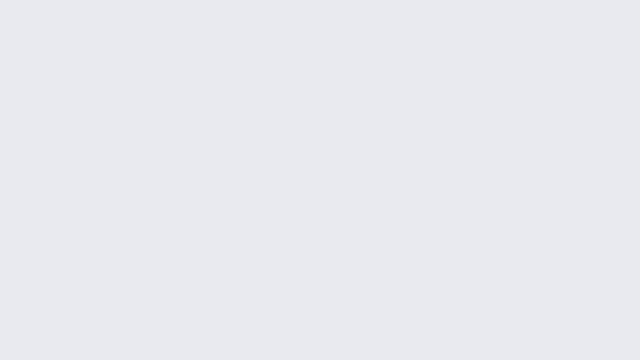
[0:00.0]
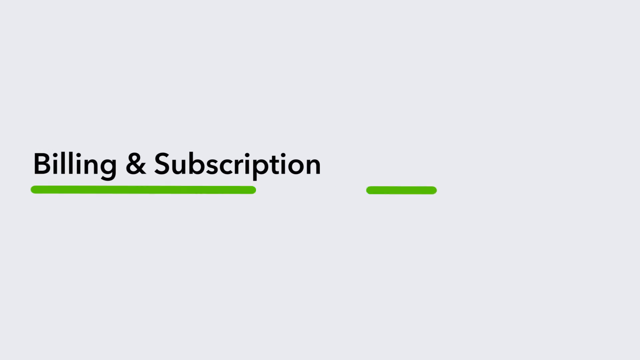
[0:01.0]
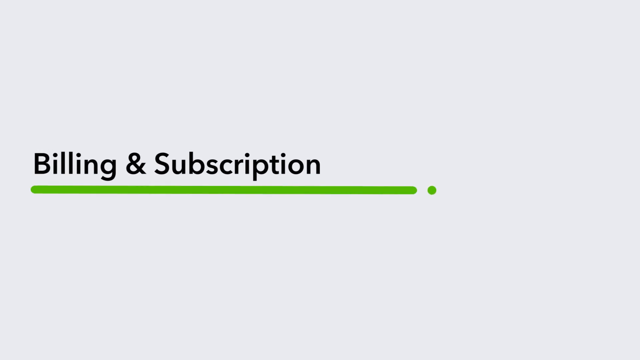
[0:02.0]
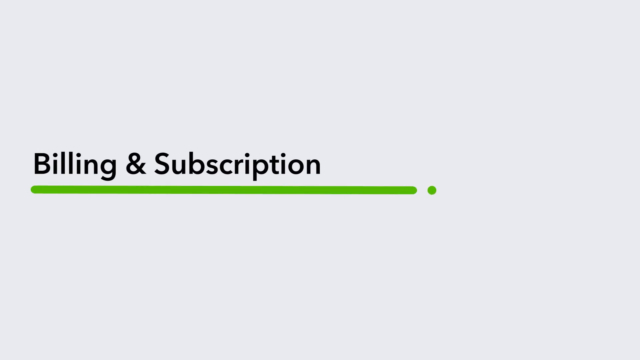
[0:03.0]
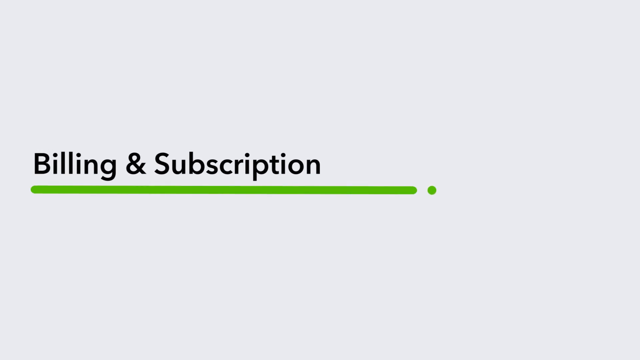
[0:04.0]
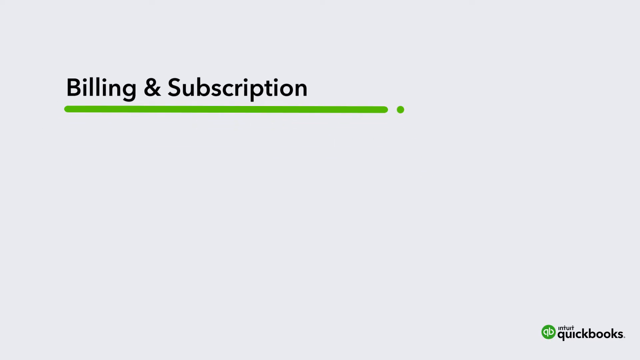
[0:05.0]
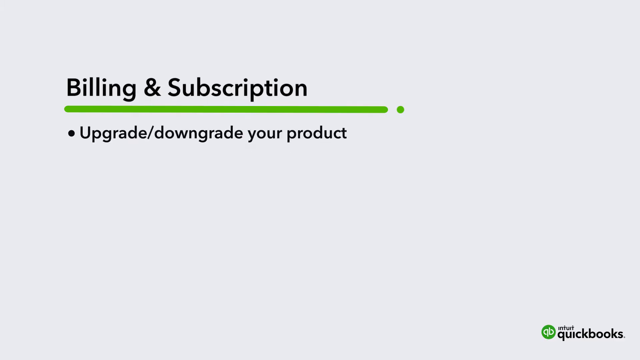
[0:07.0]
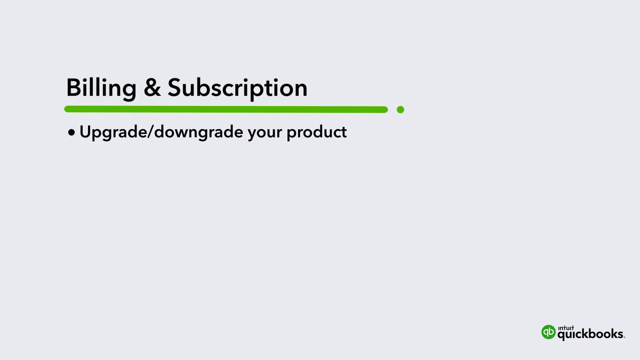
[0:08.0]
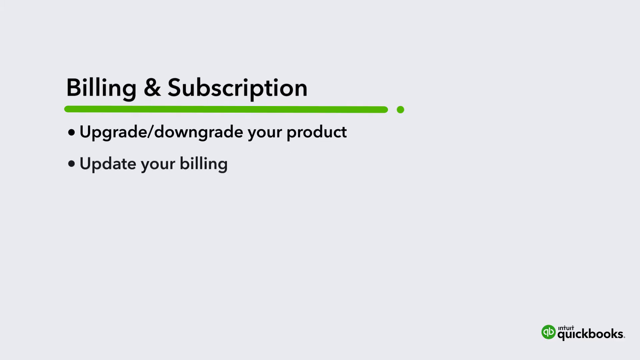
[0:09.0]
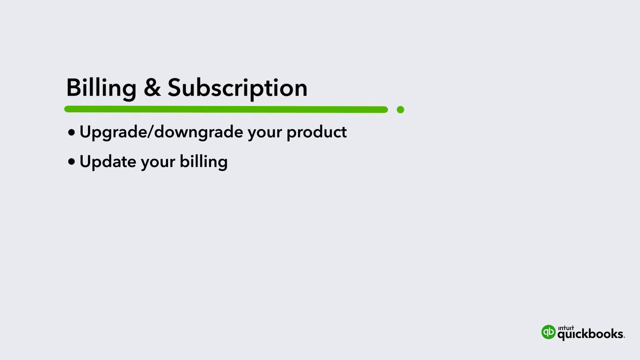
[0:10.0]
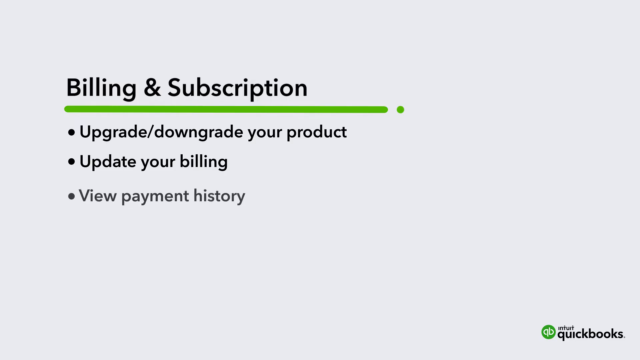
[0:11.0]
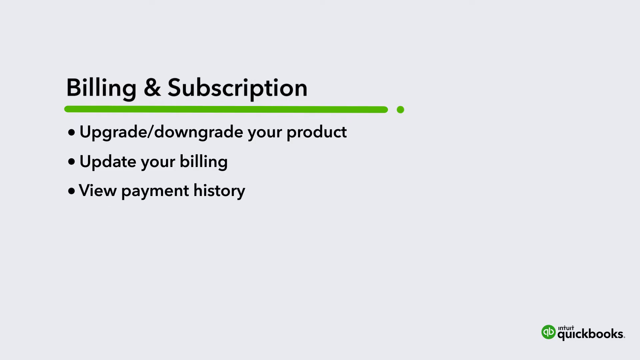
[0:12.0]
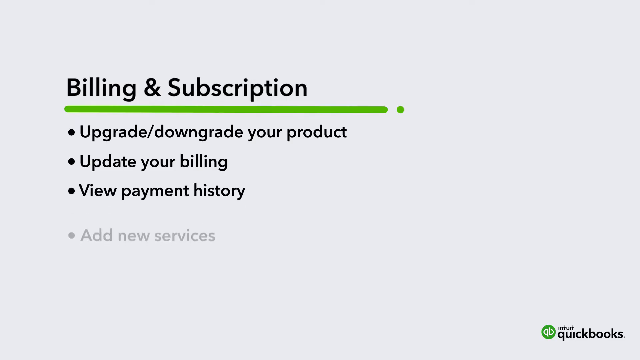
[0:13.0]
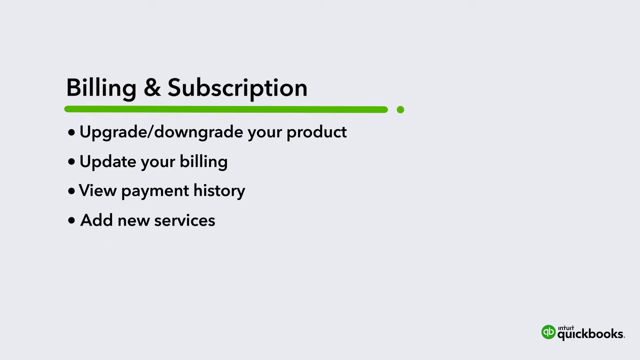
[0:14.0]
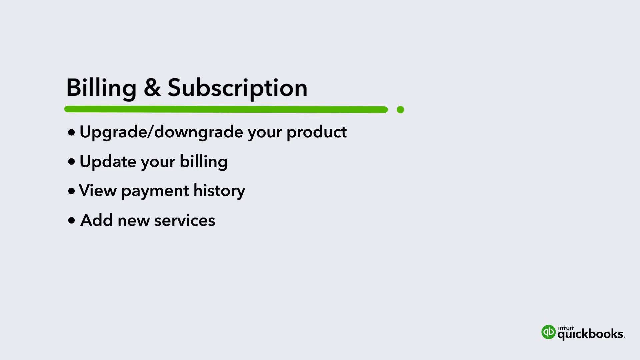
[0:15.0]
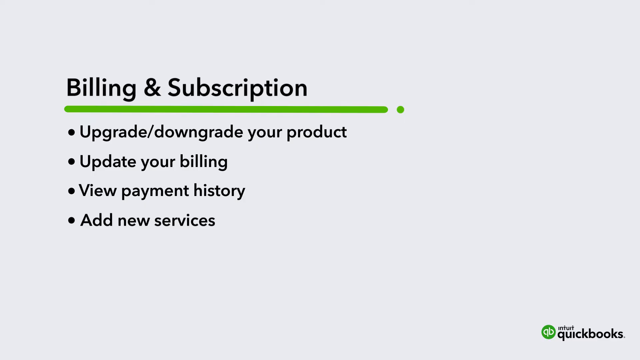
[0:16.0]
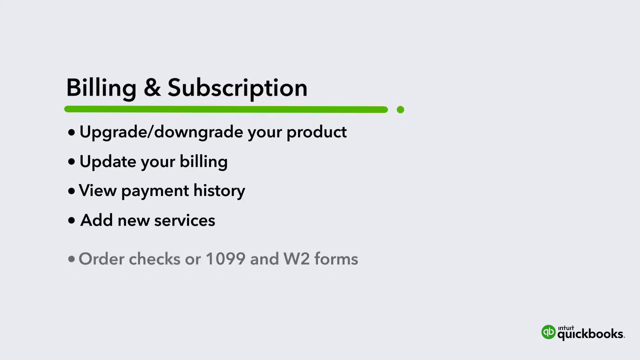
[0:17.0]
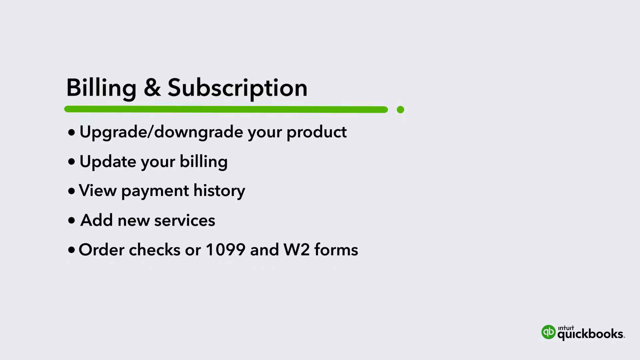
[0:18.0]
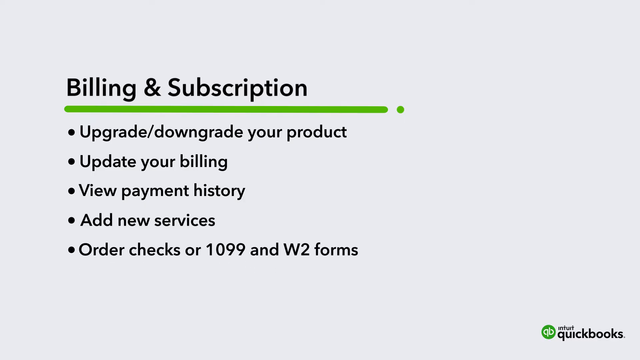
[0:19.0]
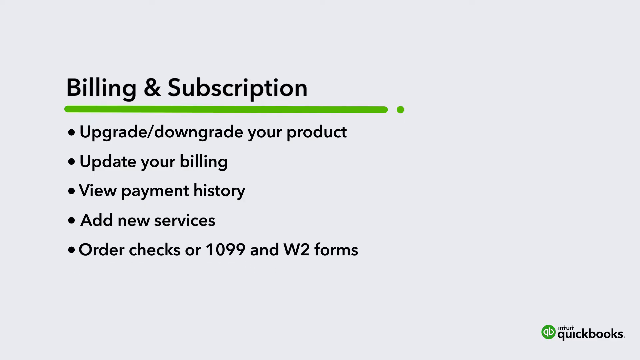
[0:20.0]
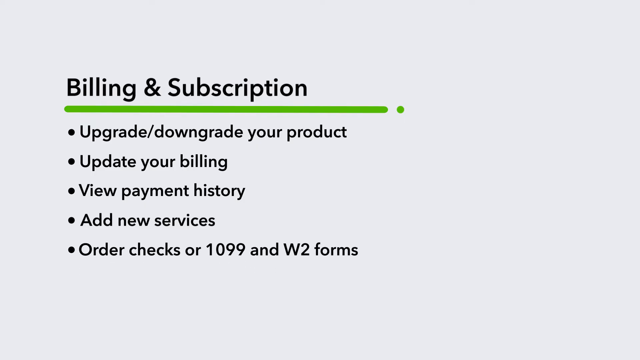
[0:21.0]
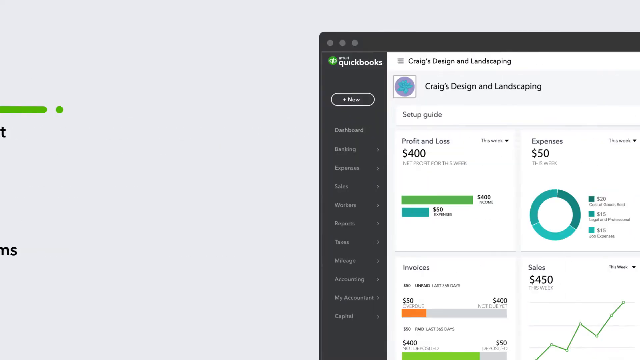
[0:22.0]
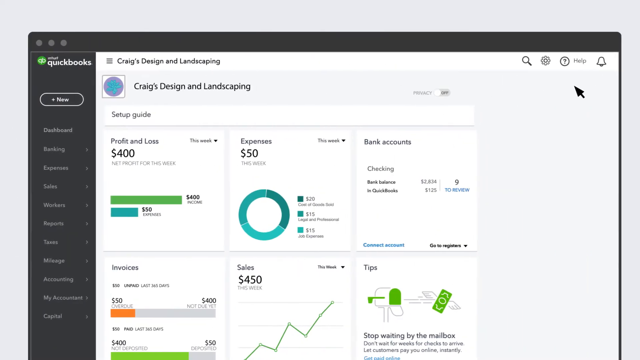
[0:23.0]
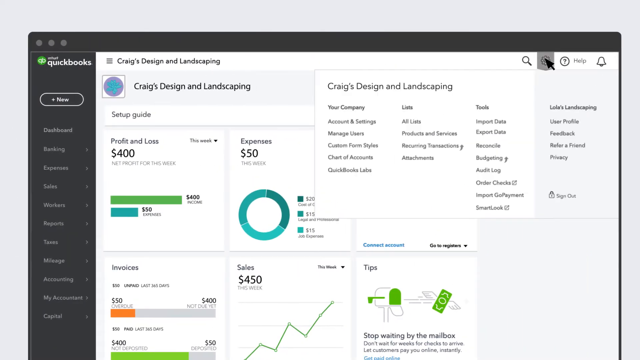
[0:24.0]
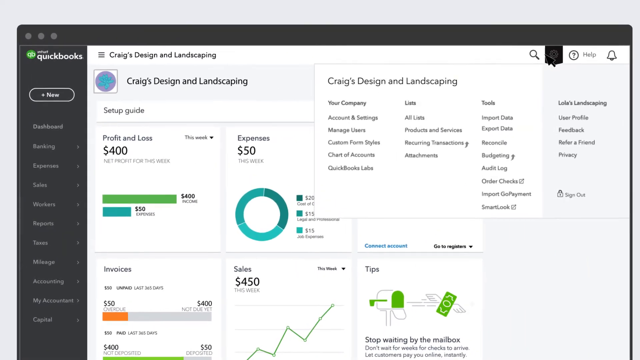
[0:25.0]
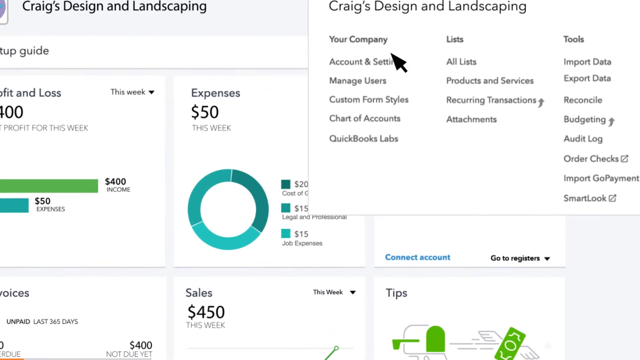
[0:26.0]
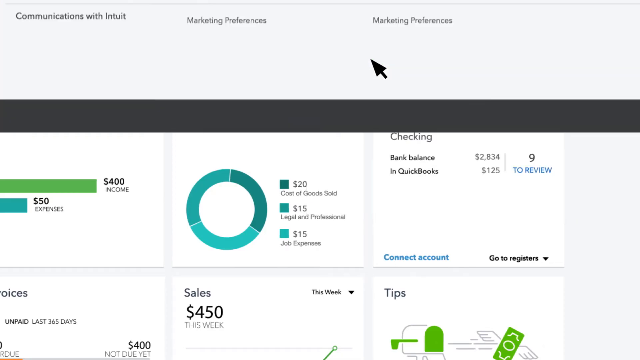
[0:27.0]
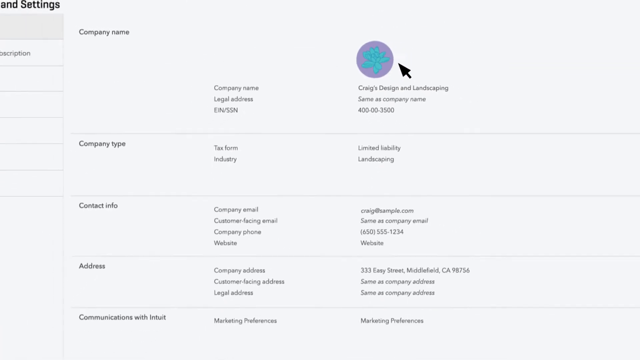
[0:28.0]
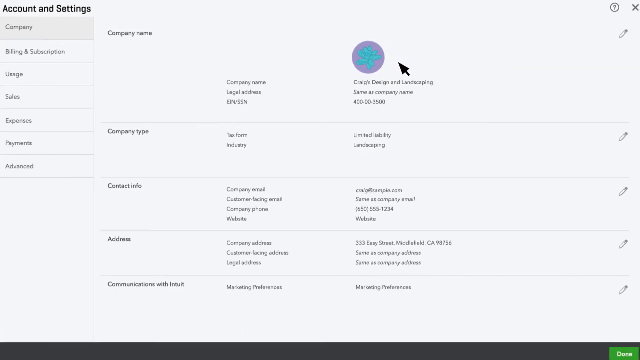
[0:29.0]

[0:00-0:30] The video, which appears to be from QuickBooks, opens on a grey background with the words "billing and subscription". It then shows related options: upgrading or downgrading the product, updating billing, viewing payment history, adding new services, and ordering cheques or 1099 forms. Next, something that seems like a page opens with "Craig's design and landscaping" written on it, apparently an example of the QuickBooks layout. The page shows profit and loss as well as expenses, and there seems to be a pie chart. The sequence ends on a grey background.